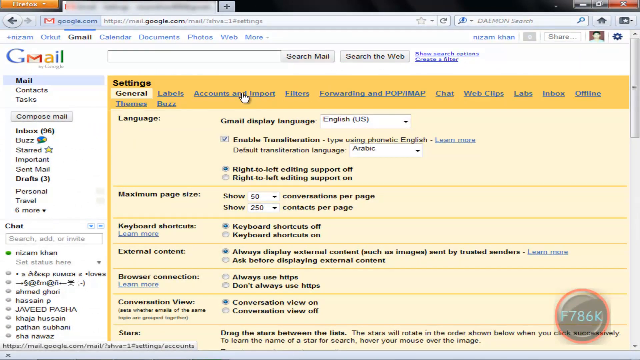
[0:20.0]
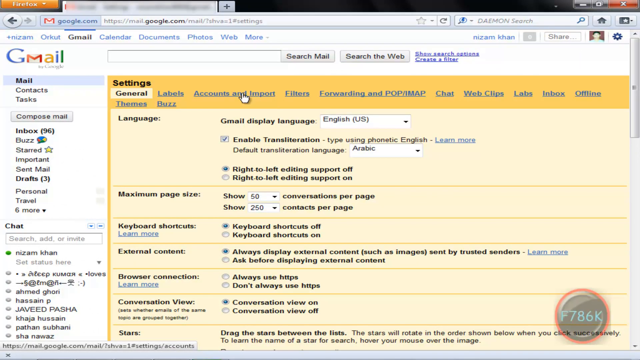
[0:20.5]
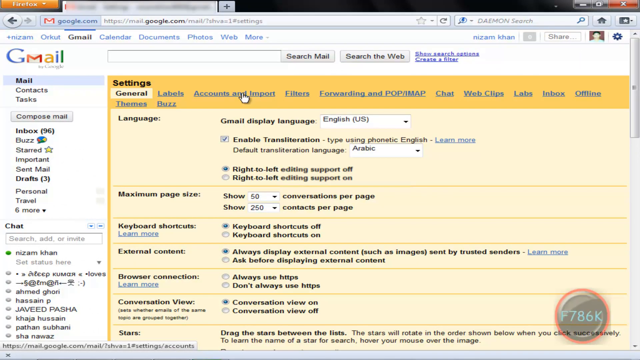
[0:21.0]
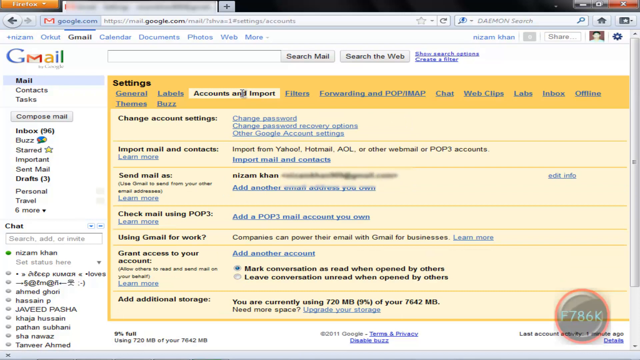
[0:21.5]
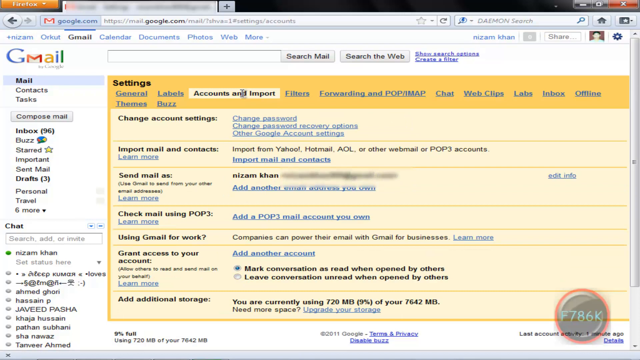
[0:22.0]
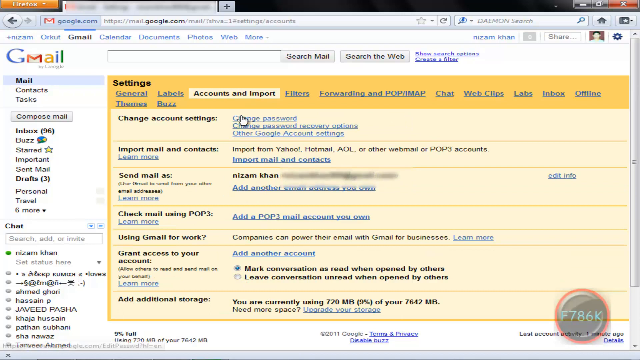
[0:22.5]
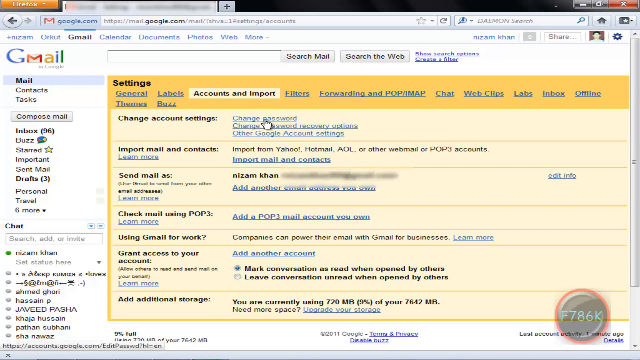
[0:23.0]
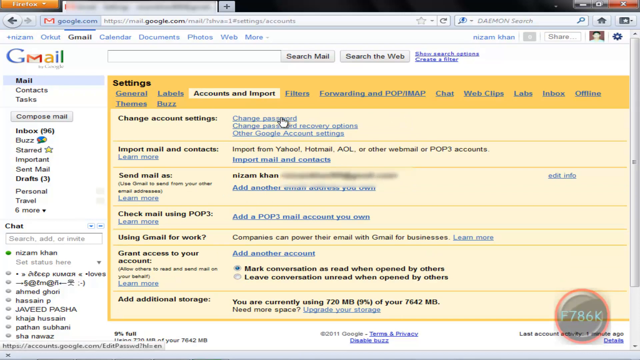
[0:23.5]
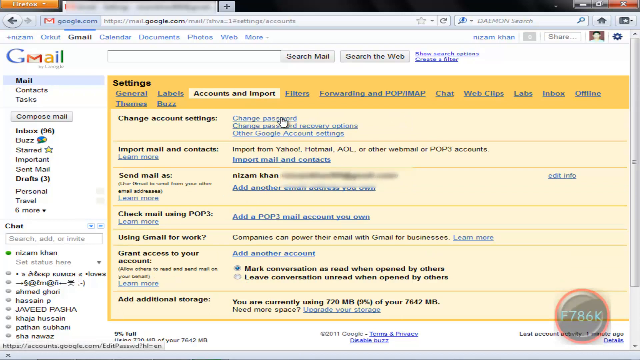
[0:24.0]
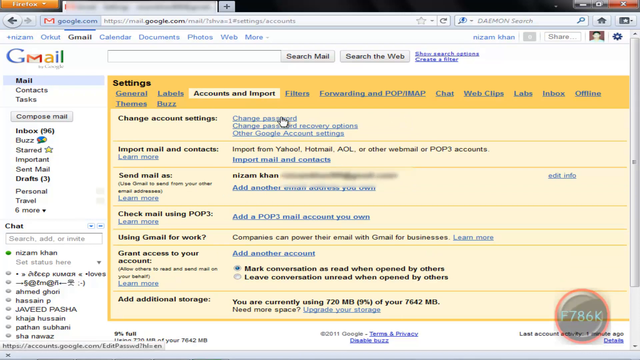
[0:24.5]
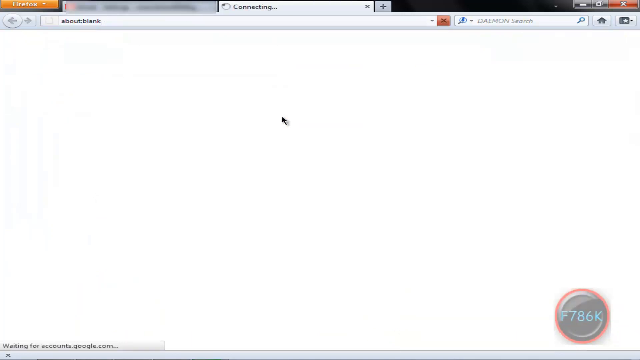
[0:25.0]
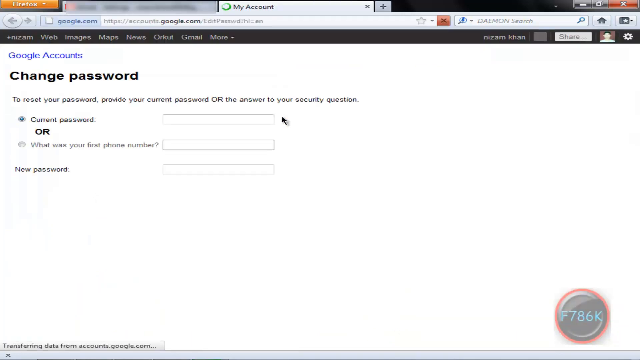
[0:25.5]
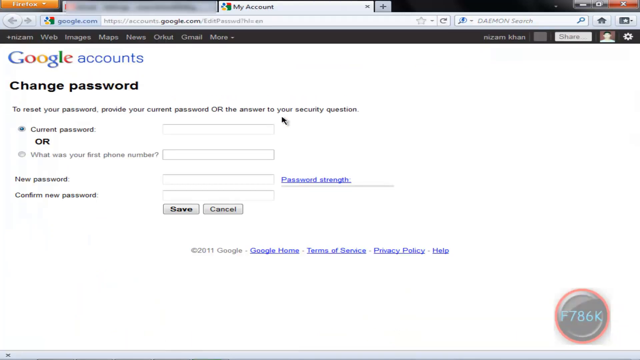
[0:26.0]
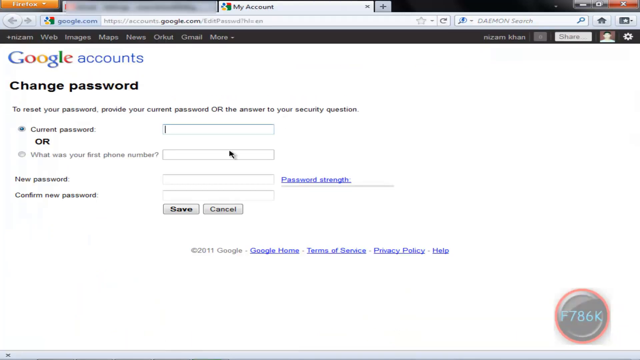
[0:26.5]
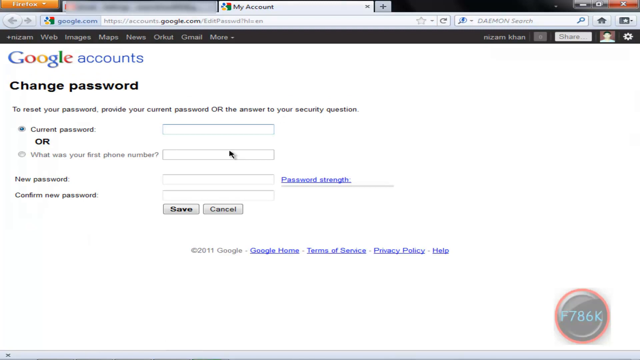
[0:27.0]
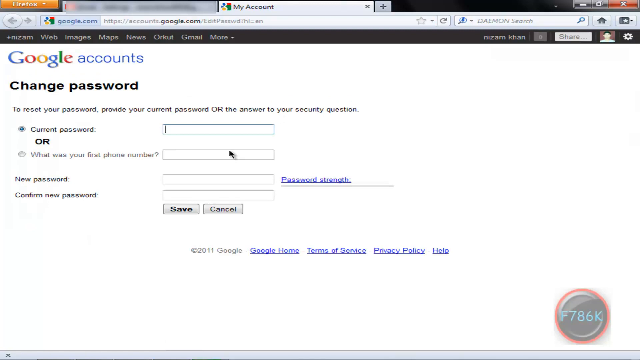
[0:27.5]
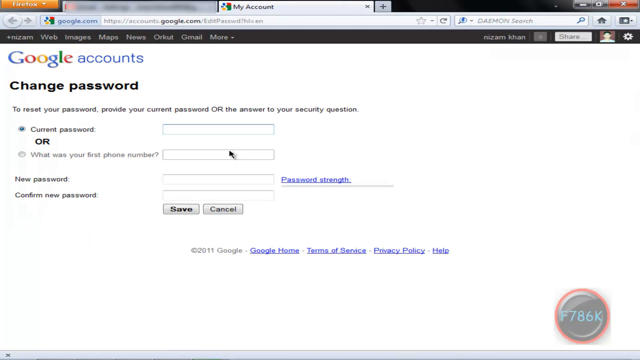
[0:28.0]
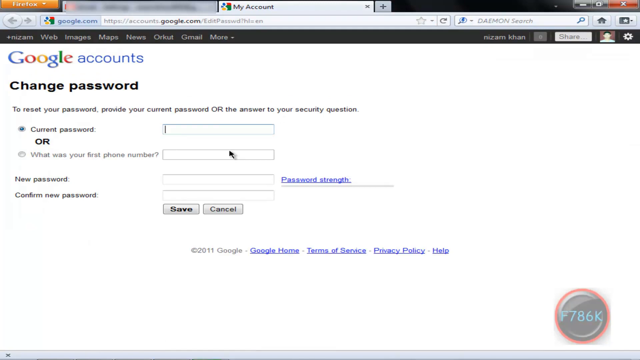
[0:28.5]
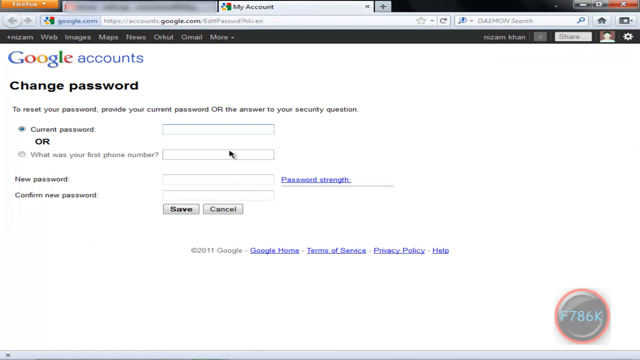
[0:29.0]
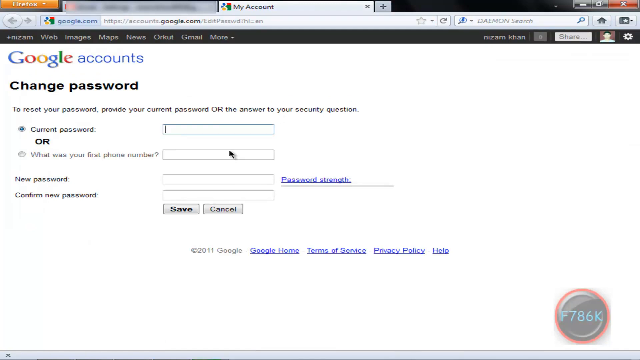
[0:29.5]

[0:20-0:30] The person clicks the accounts and import tab, revealing multiple account settings in different categories. The category reading "change account settings" has options such as "change password", "change password recovery options", and other Google account settings. They click change password, which opens a new tab showing a Google accounts page titled "change password". It offers the option to provide the current password or to answer the security question for the account in order to reset it. Below are new password fields, with a field to confirm the new password right below, and a password strength indicator right next to that. The current password option is selected by default.